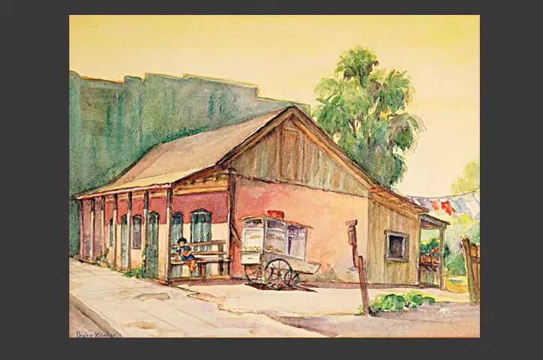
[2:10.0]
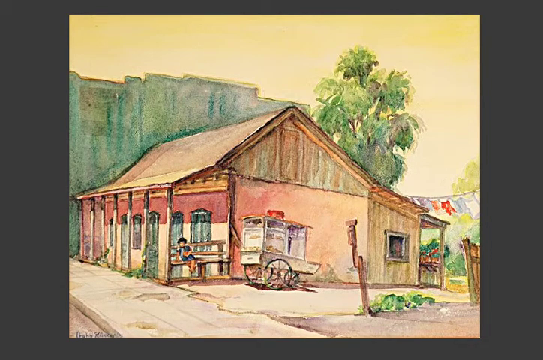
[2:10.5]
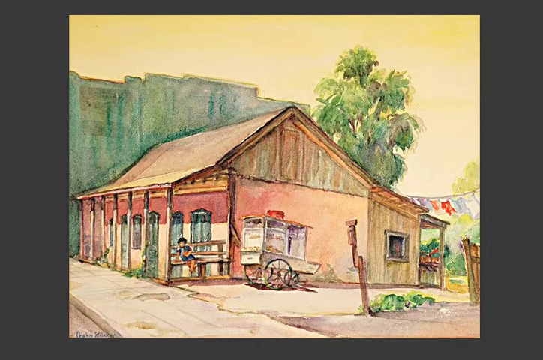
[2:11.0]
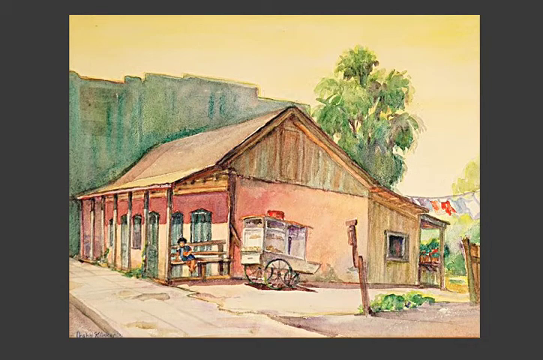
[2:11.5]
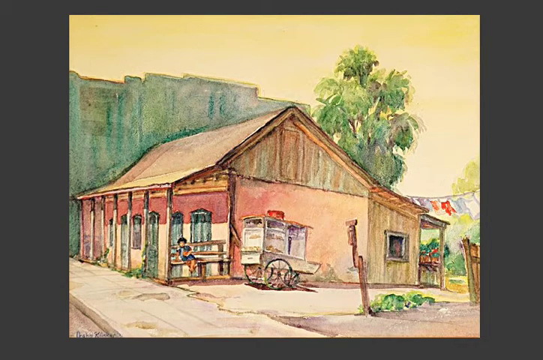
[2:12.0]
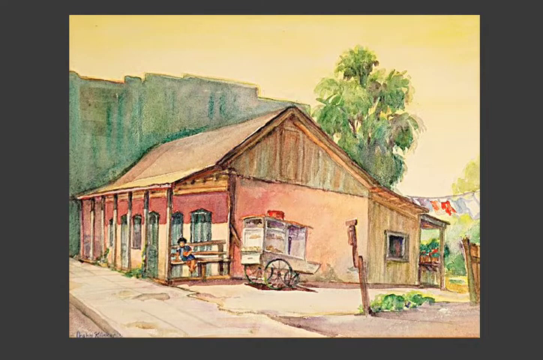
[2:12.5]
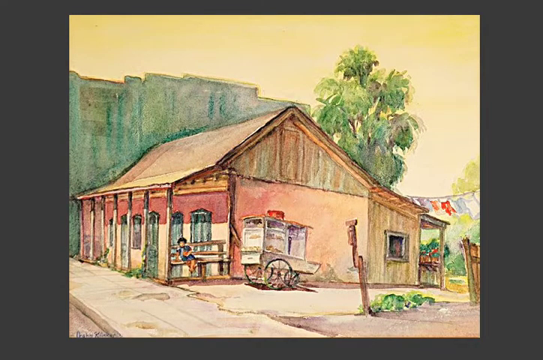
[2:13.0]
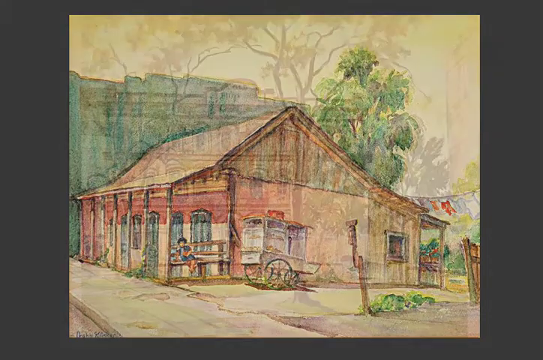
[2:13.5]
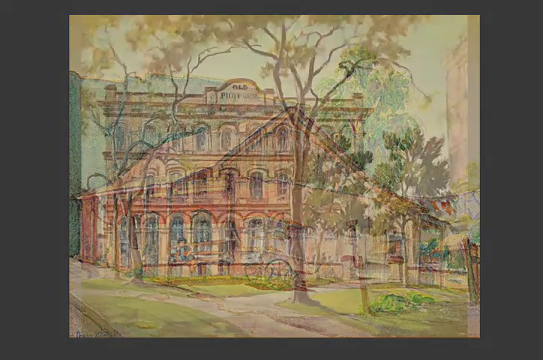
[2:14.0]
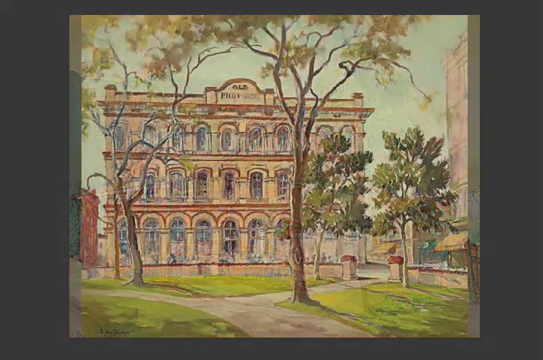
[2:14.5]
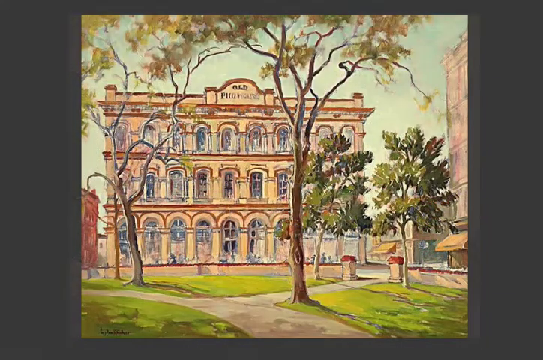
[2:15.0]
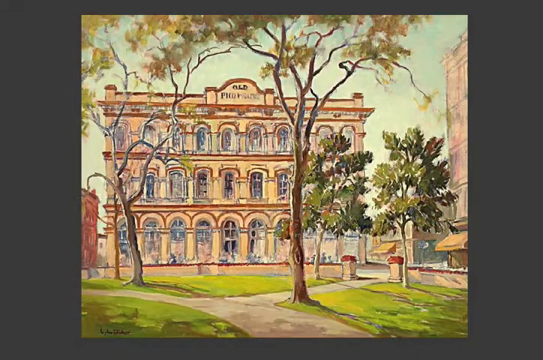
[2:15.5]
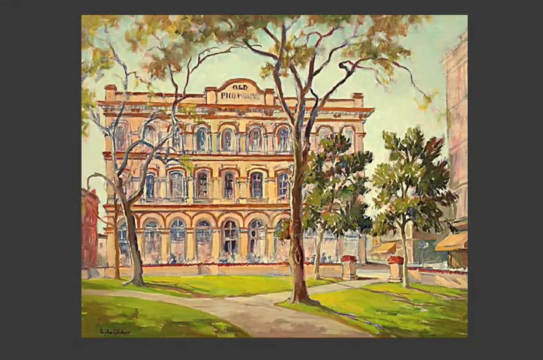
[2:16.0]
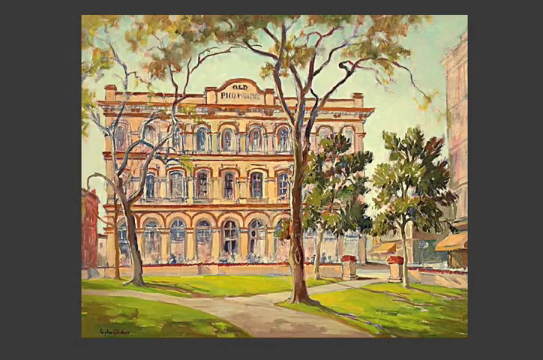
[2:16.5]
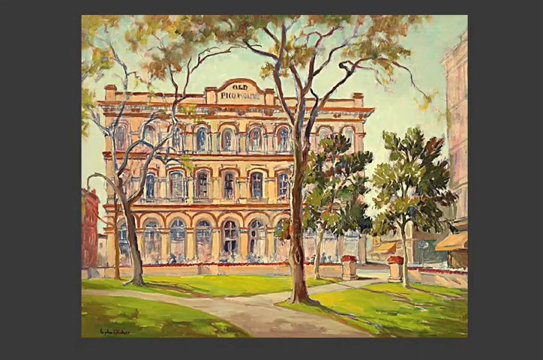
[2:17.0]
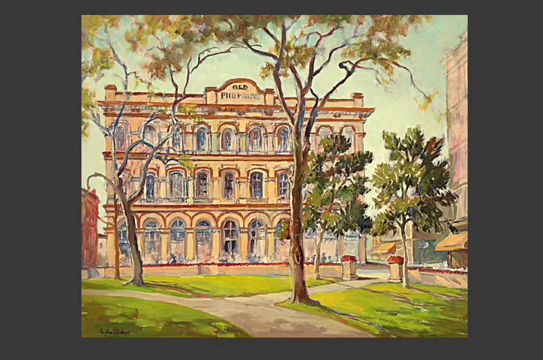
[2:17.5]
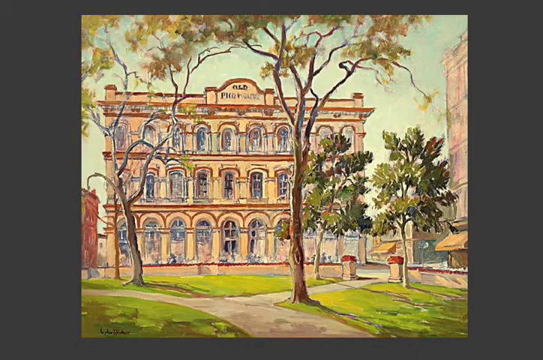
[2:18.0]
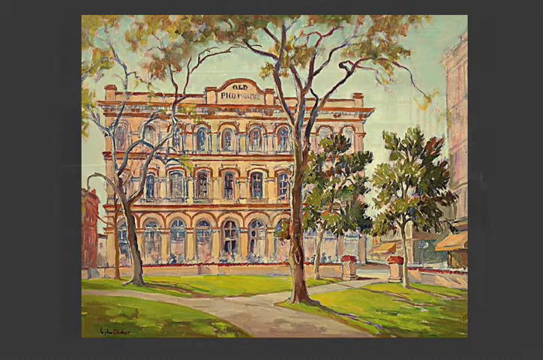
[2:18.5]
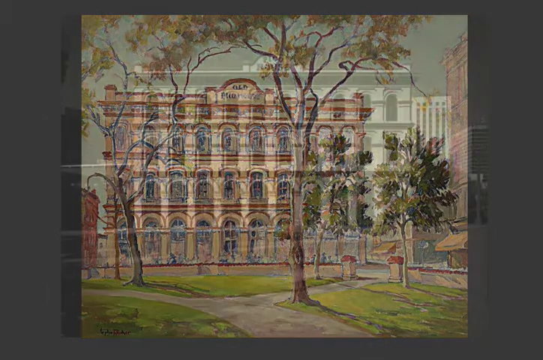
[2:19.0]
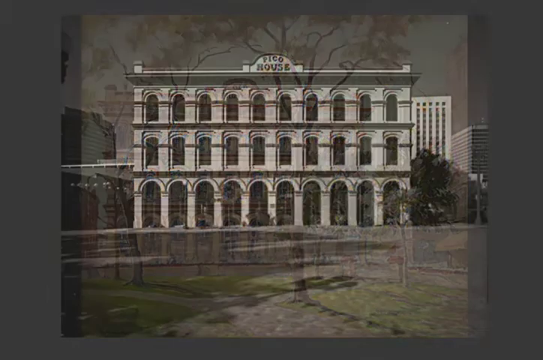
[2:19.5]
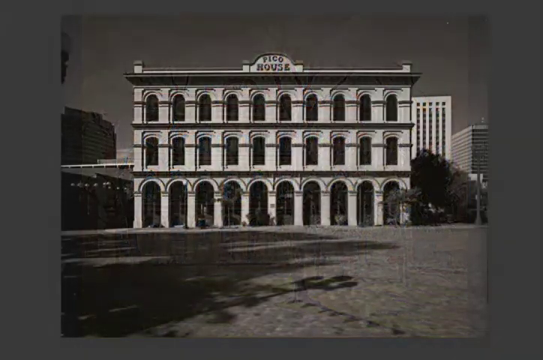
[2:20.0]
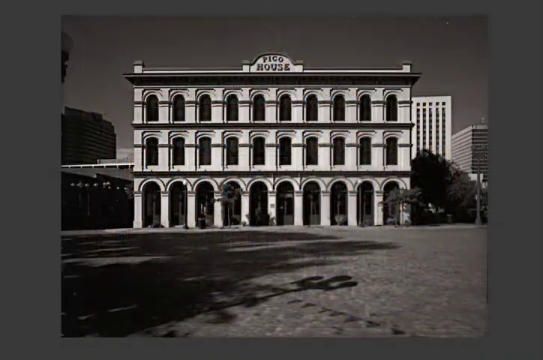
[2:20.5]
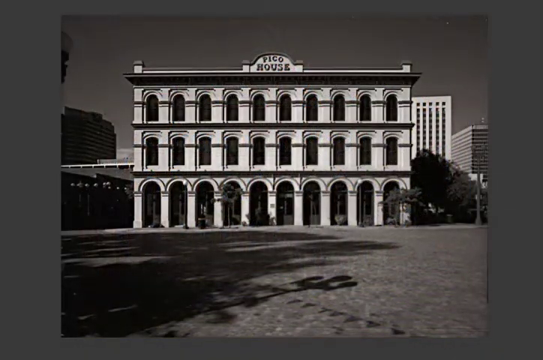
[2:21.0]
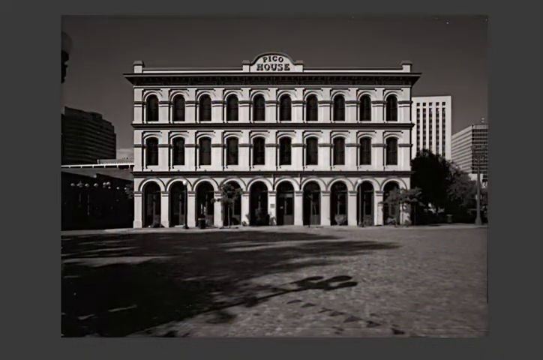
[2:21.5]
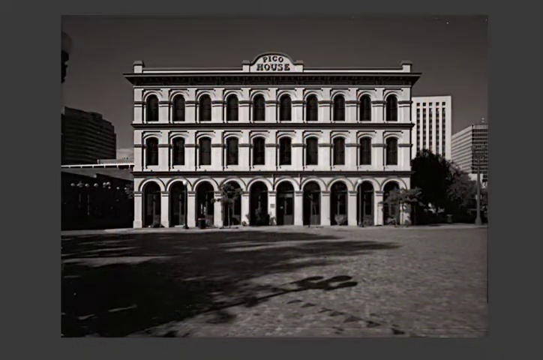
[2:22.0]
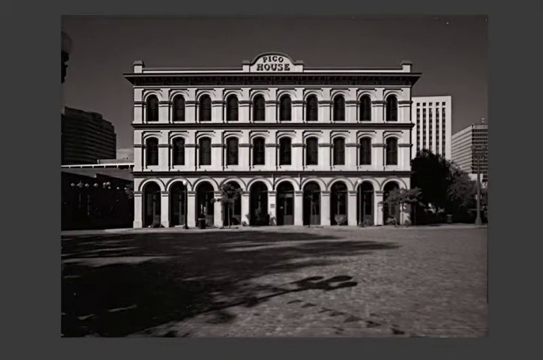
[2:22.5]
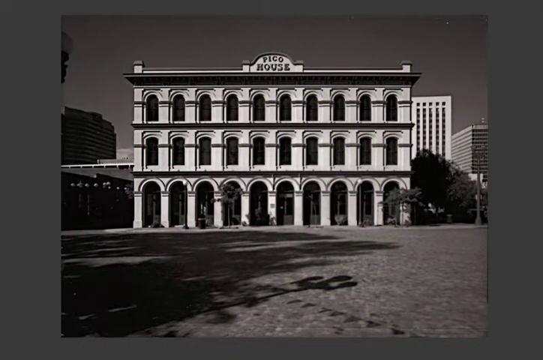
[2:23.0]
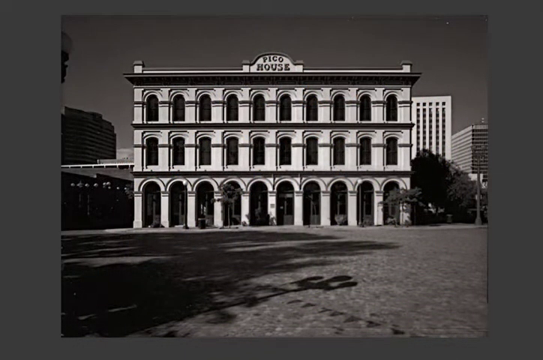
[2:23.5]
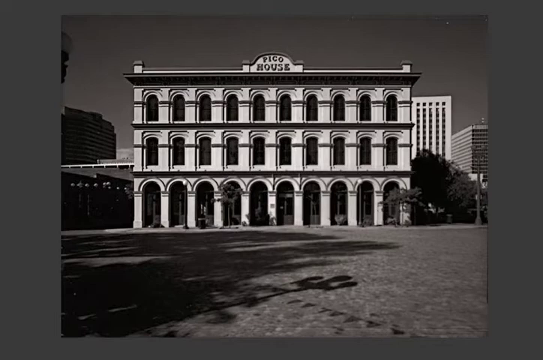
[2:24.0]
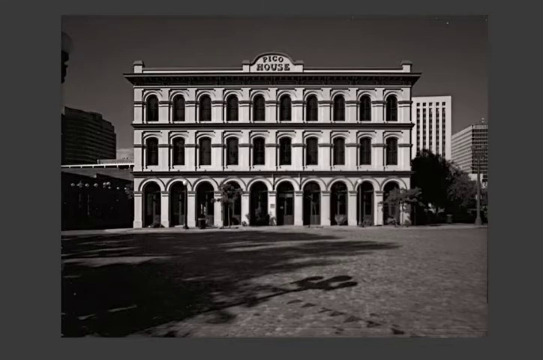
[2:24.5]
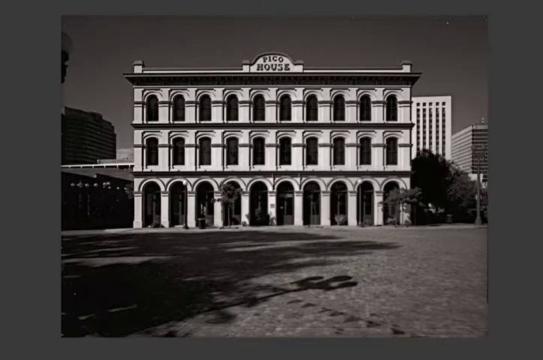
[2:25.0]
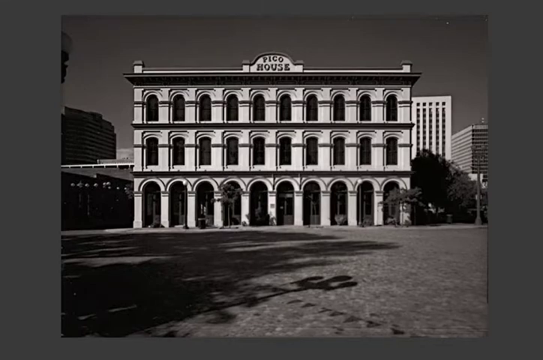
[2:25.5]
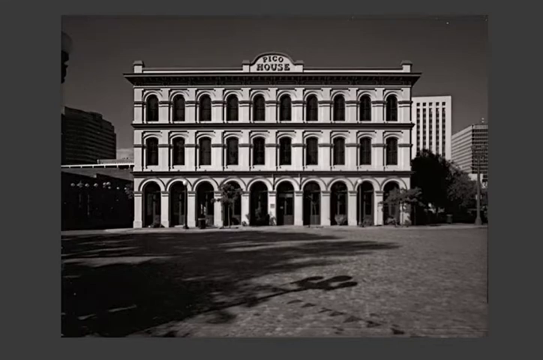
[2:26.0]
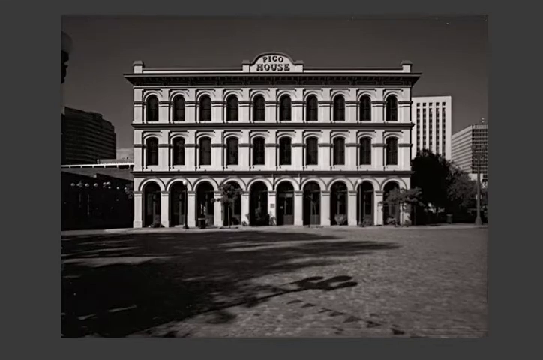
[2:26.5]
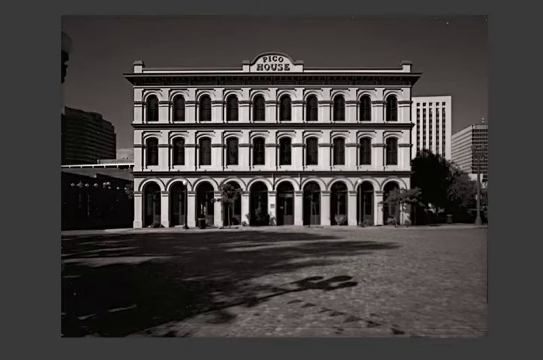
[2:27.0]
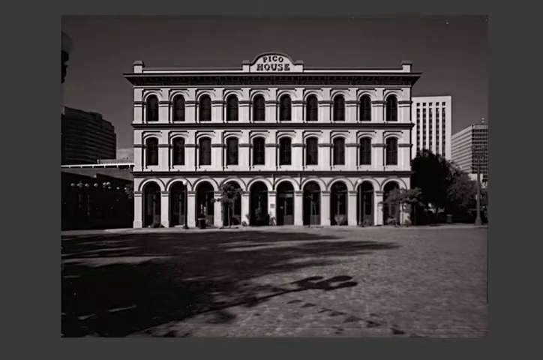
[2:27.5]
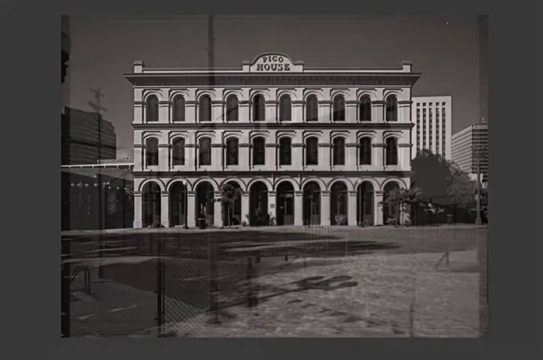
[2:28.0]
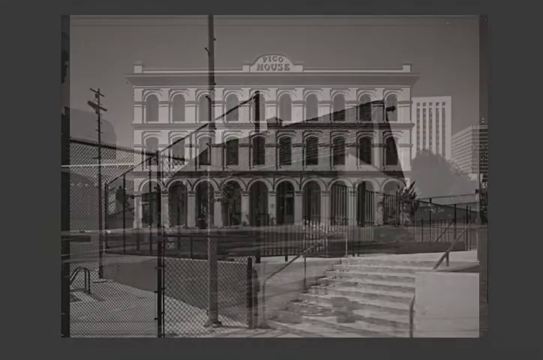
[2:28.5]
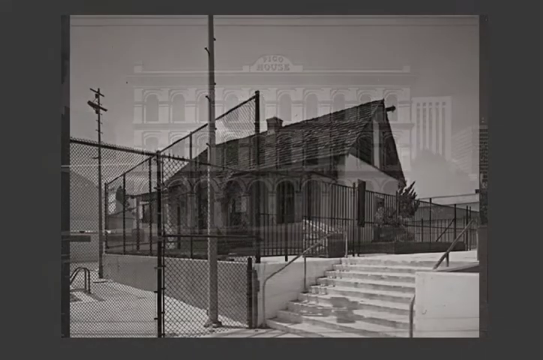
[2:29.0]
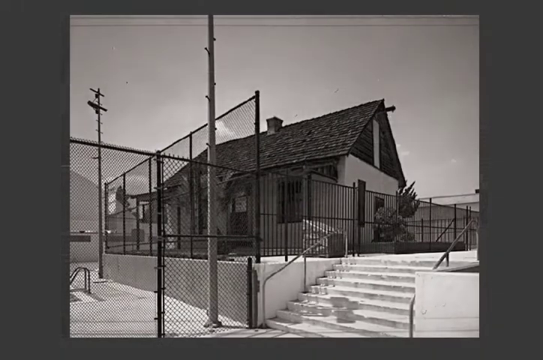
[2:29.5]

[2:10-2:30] Over a grey background is a painting of a large building that looks to be a hotel. The painting is very quickly or poorly done; the building is beige with three floors and about ten windows on every floor. In the foreground seems to be a park with what looks like four trees and a path through the park. That picture is replaced with an actual picture of what the painting was based on, which seems to be the Pico house. This black and white photo shows the three levels of the building. The entire bottom looks like a balcony or a porch of sorts, and there are 10 windows on each floor. There are tall buildings to the right in the background and a lawn in the foreground.